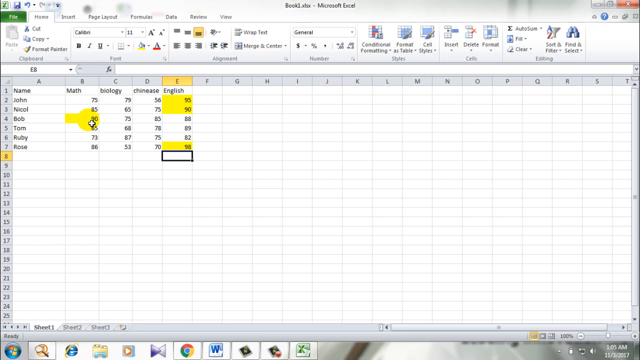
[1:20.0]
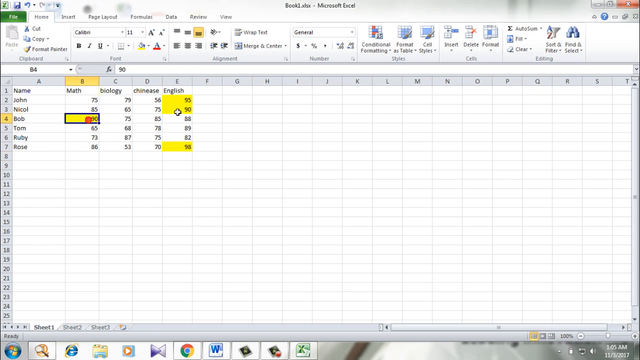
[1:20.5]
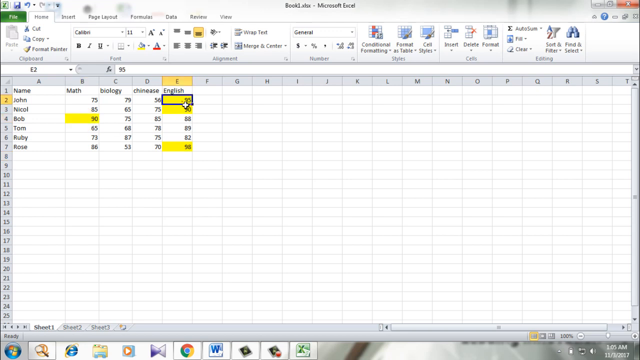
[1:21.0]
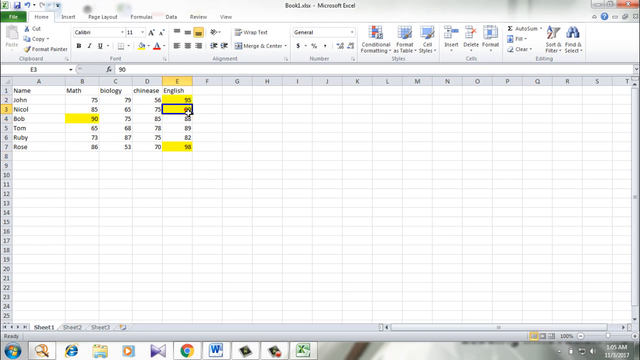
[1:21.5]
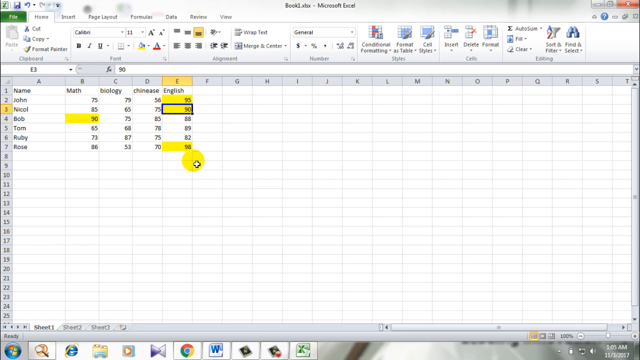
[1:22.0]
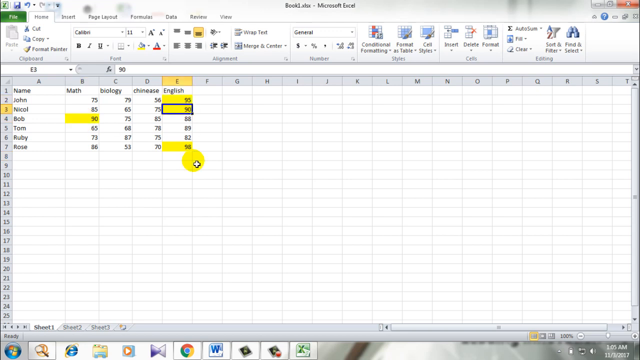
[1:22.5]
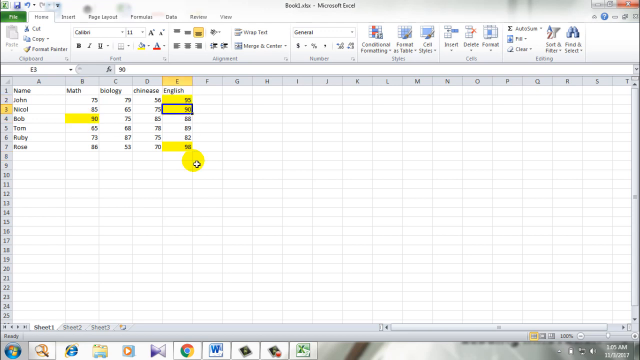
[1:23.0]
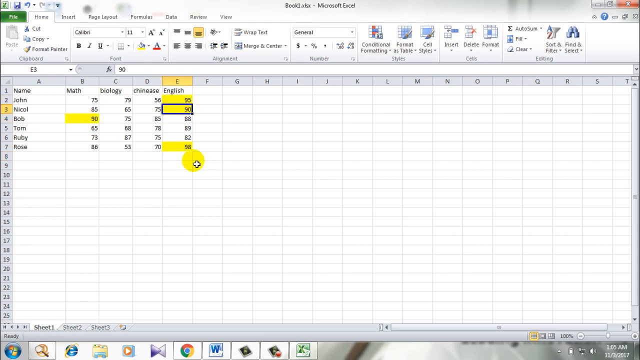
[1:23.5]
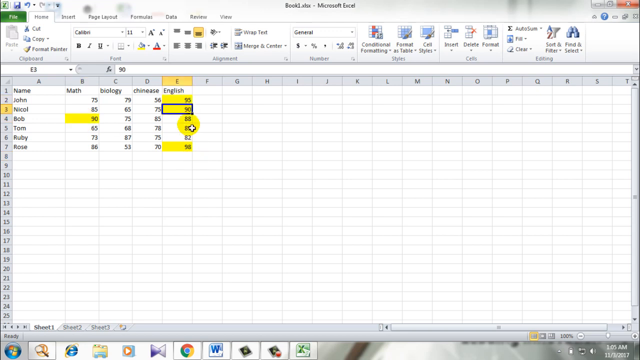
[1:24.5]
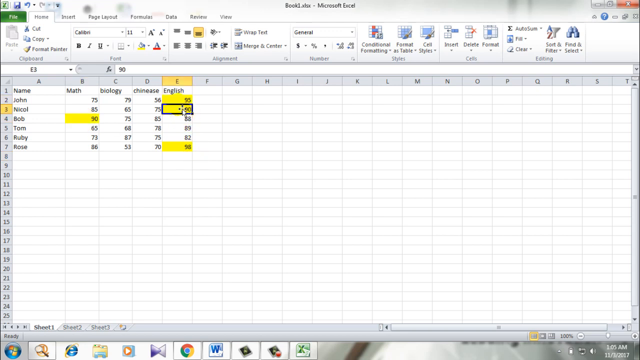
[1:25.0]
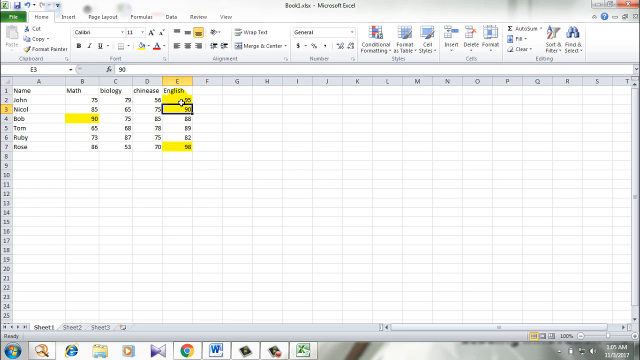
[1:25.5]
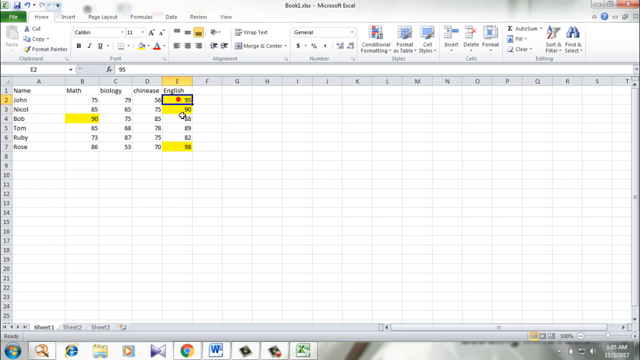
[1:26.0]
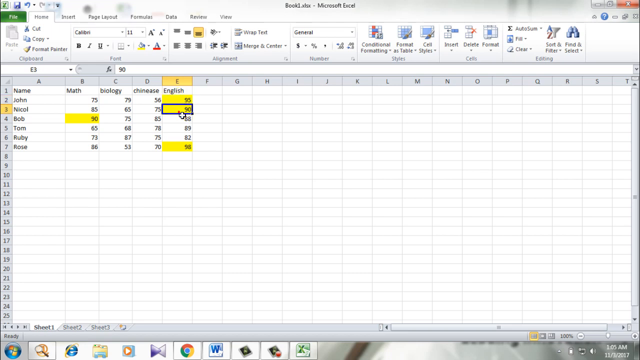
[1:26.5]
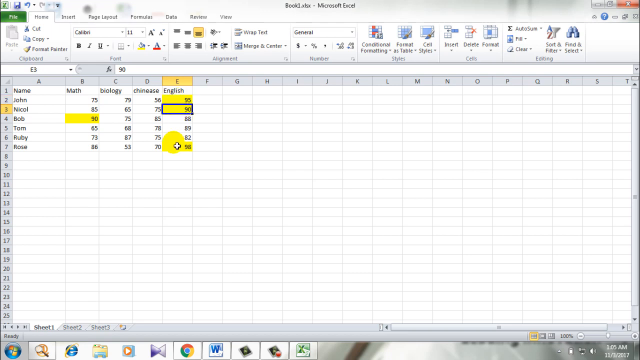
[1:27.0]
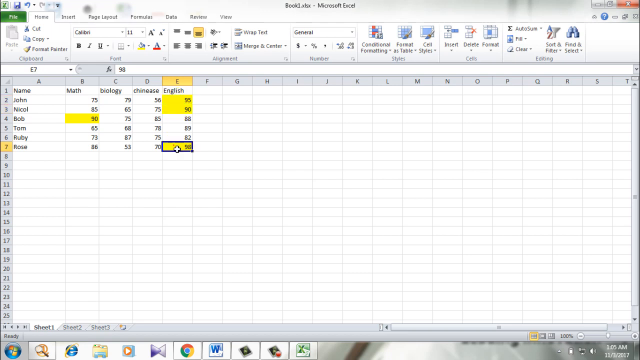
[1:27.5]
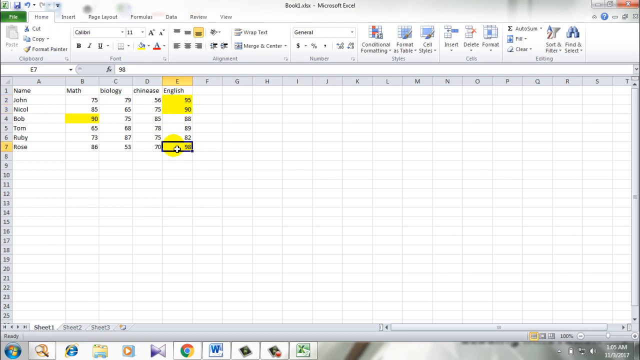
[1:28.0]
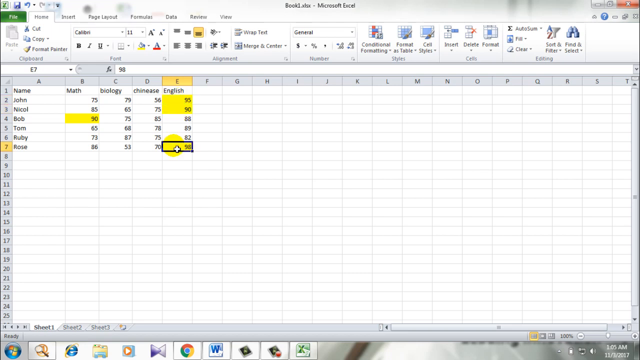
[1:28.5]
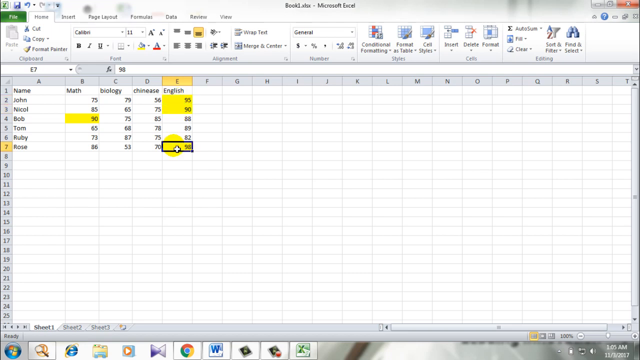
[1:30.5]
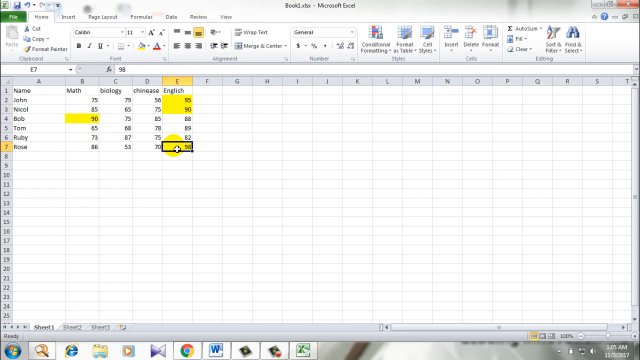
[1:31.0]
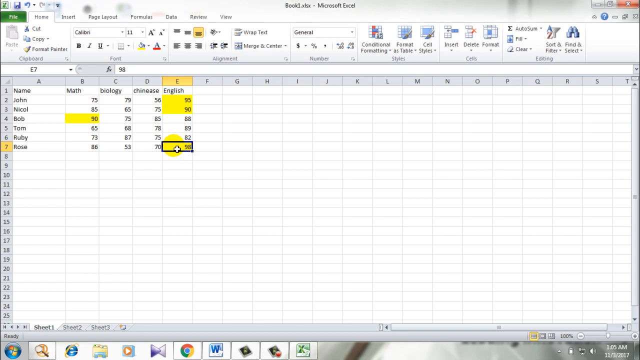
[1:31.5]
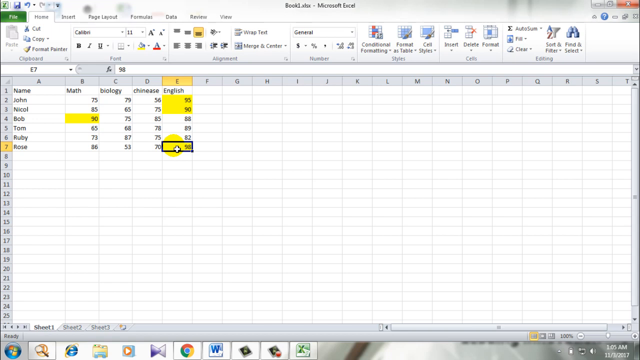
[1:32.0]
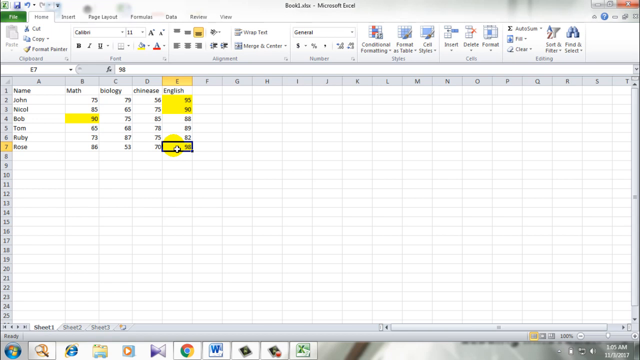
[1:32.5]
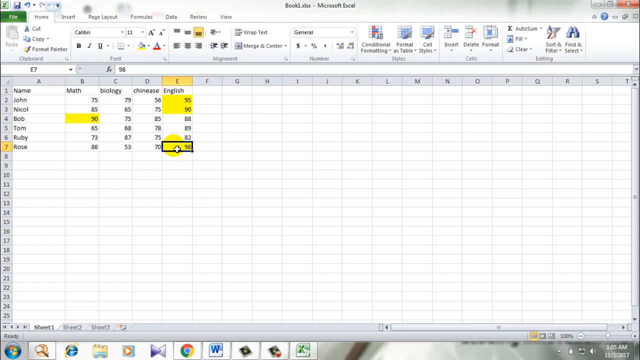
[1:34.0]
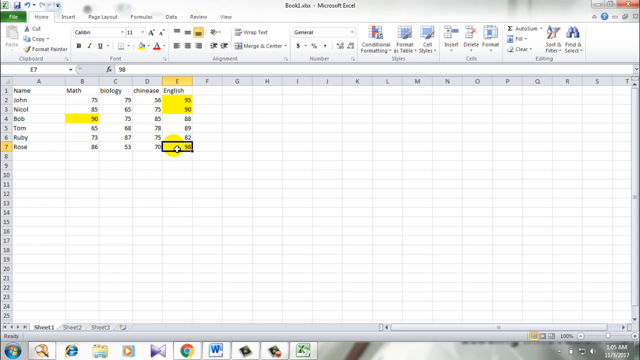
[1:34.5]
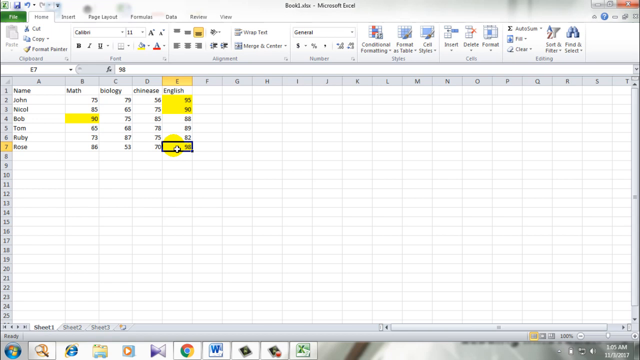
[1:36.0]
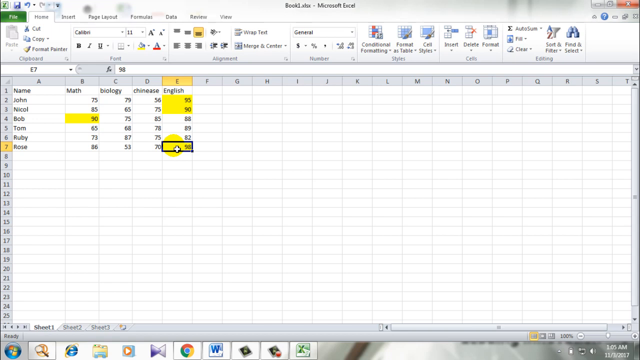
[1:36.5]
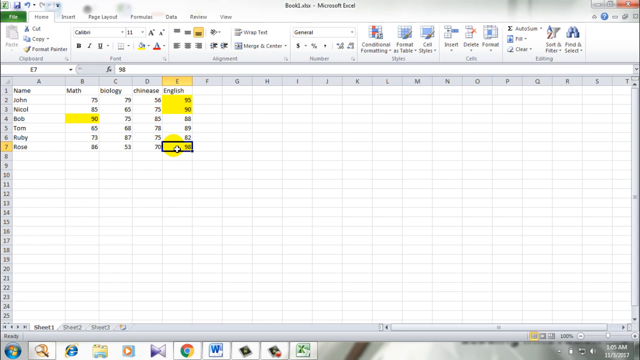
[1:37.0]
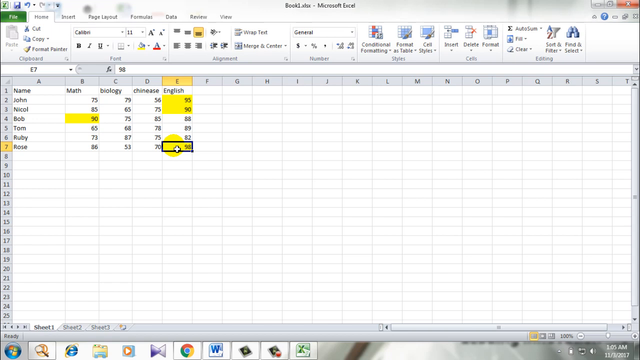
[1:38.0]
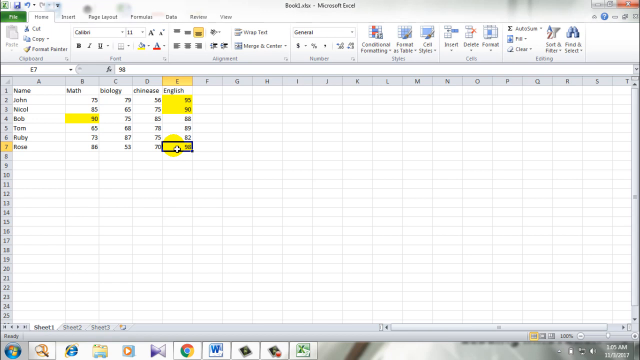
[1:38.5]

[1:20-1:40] The small Microsoft Excel table is five columns wide, with name, math, biology, Chinese and English columns, and seven rows down, listing John, Nicole, Bob, Tom, Ruby and Rose with their scores in each subject. Conditional formatting has been applied so that all values between 90 and 100 have a yellow background, and the educator clicks around the cells to show which ones have that yellow background.